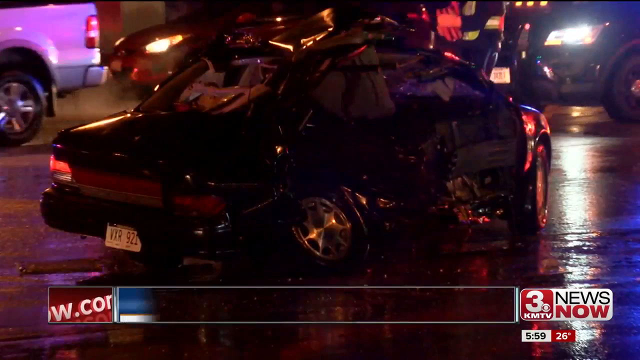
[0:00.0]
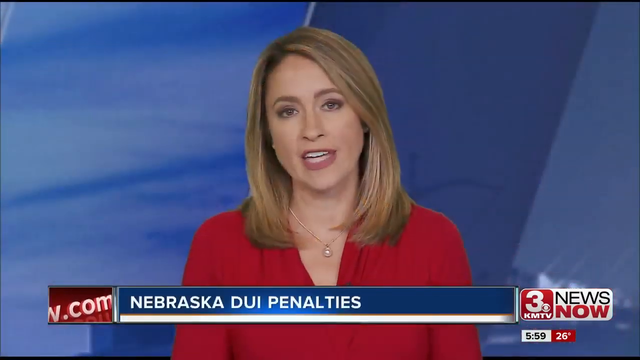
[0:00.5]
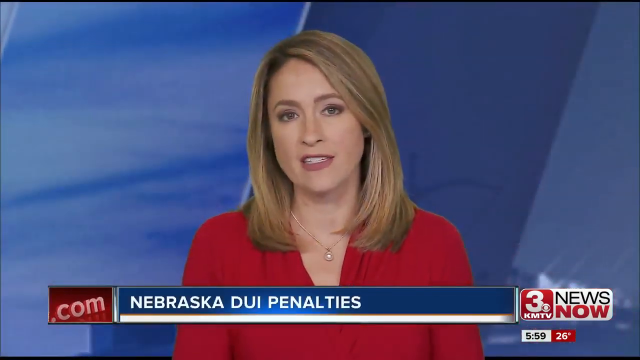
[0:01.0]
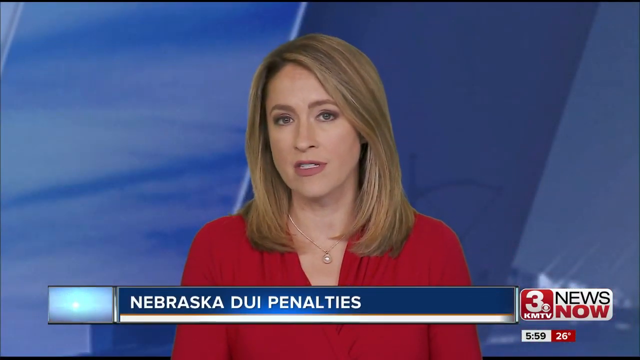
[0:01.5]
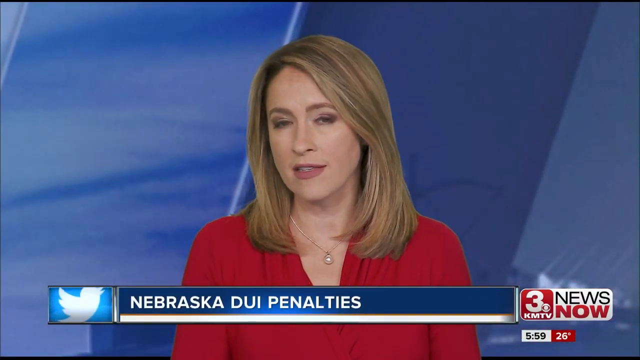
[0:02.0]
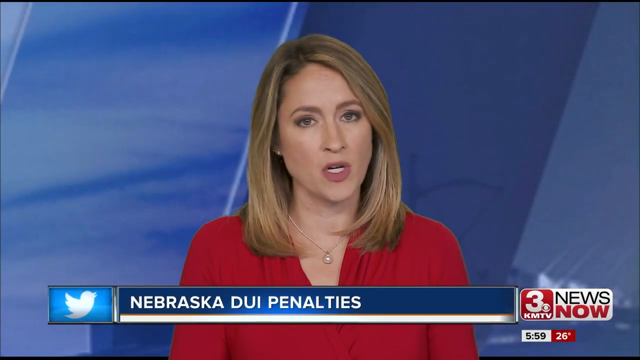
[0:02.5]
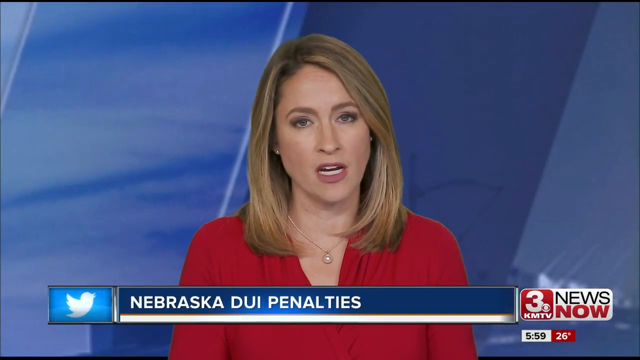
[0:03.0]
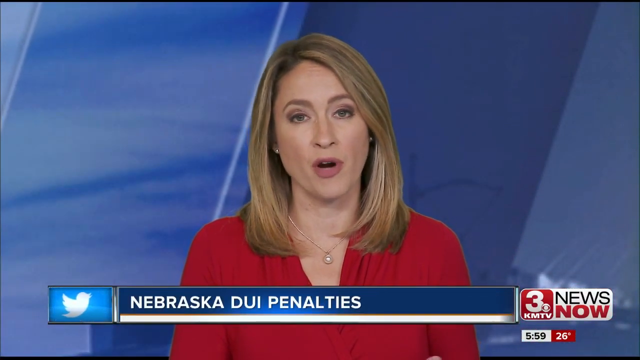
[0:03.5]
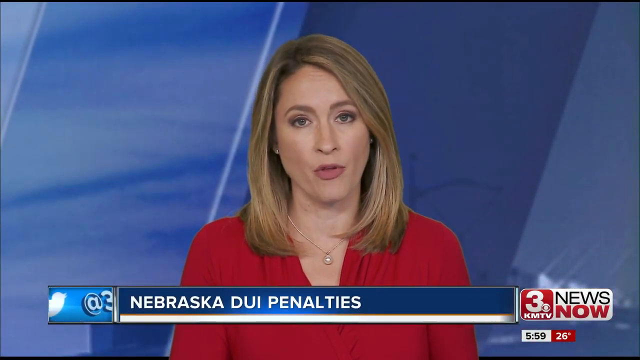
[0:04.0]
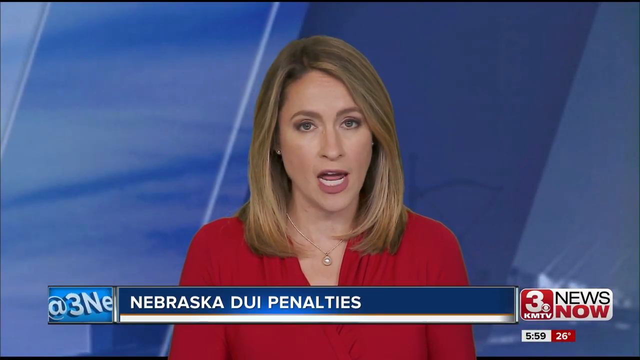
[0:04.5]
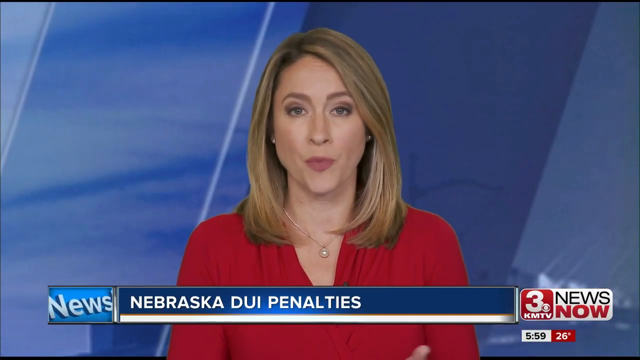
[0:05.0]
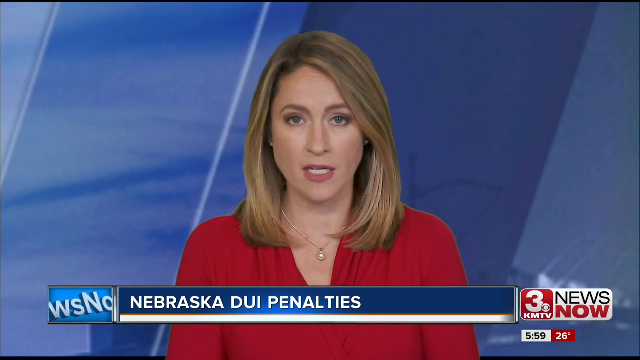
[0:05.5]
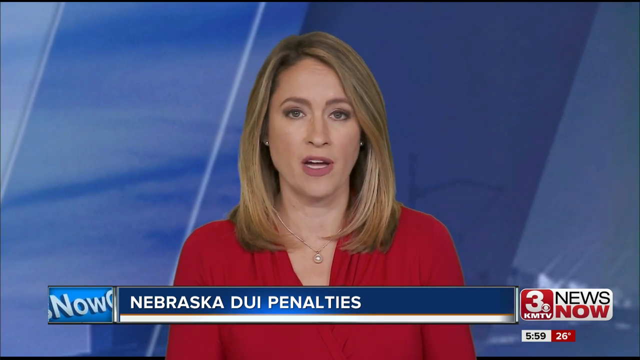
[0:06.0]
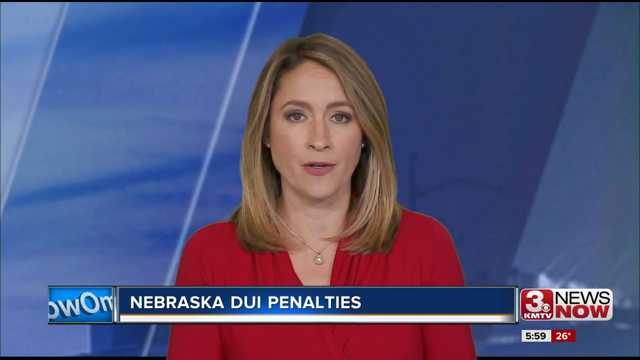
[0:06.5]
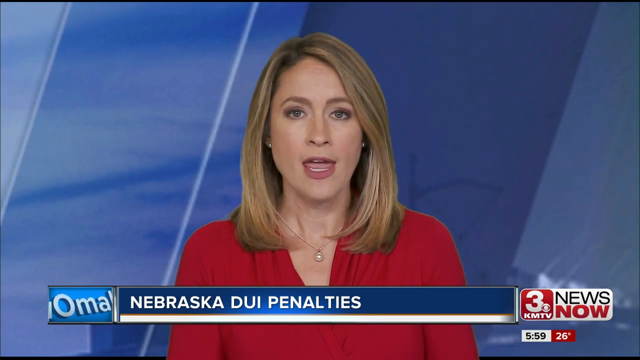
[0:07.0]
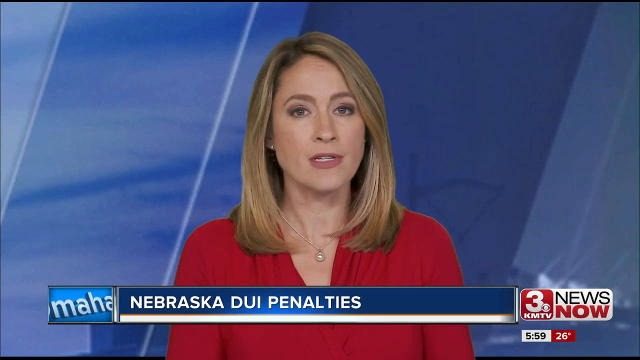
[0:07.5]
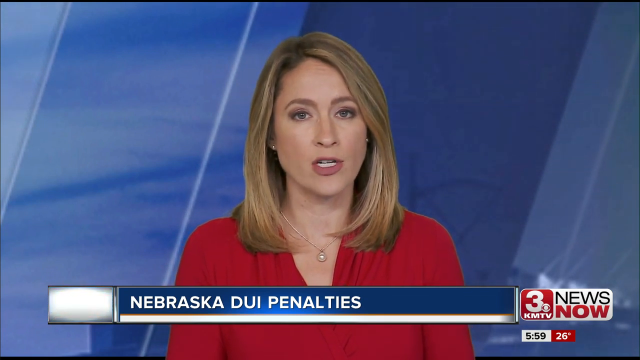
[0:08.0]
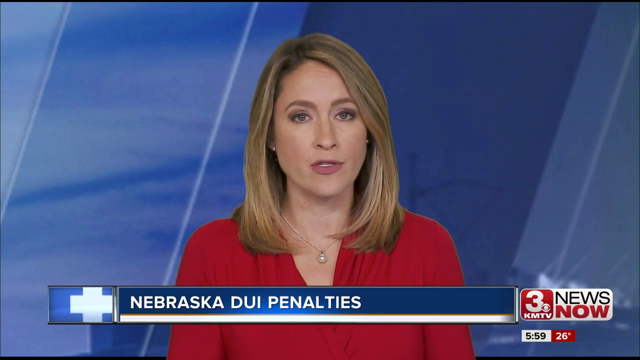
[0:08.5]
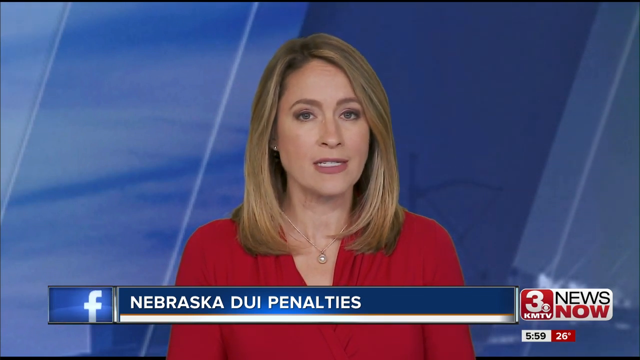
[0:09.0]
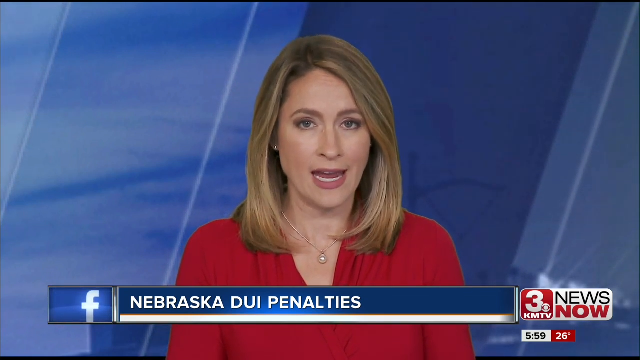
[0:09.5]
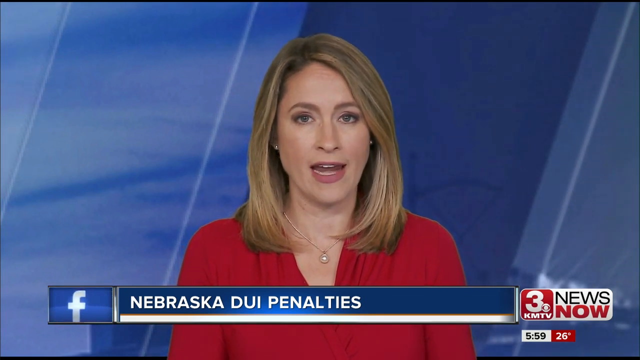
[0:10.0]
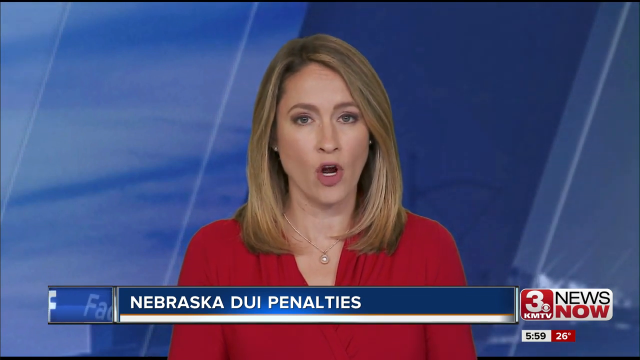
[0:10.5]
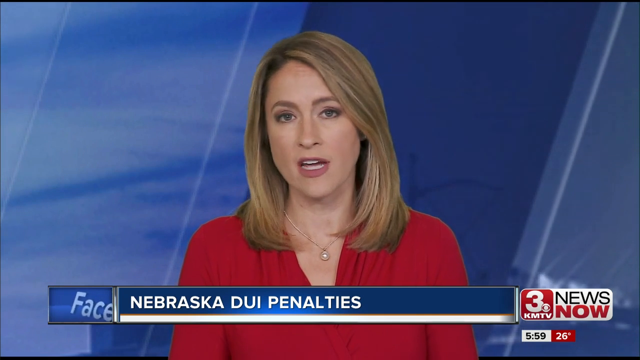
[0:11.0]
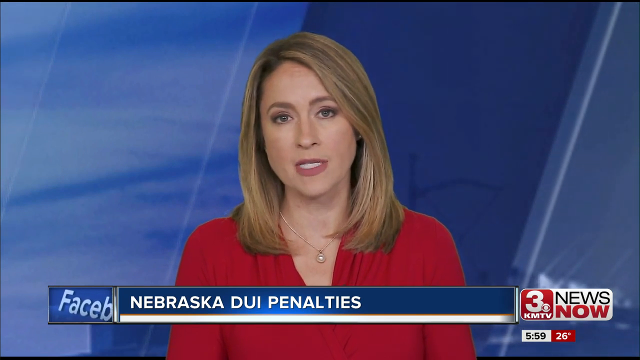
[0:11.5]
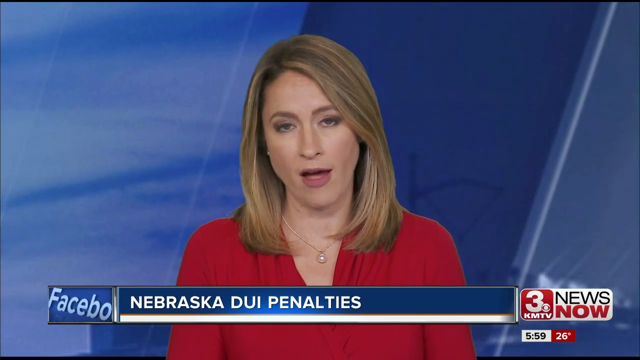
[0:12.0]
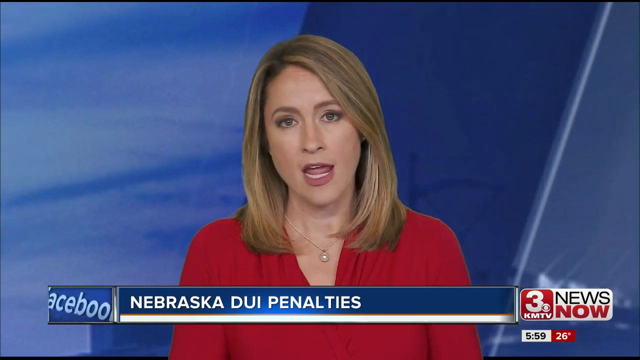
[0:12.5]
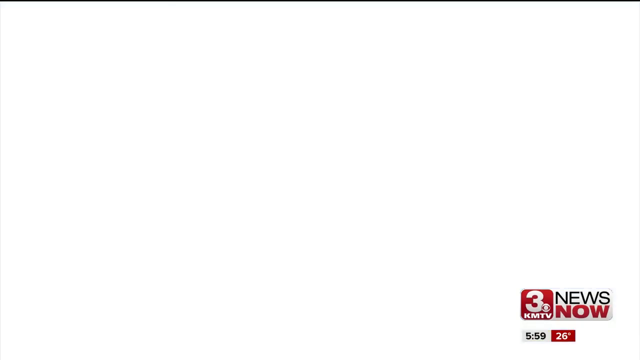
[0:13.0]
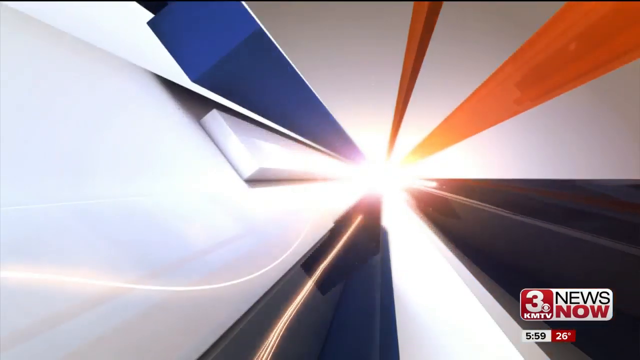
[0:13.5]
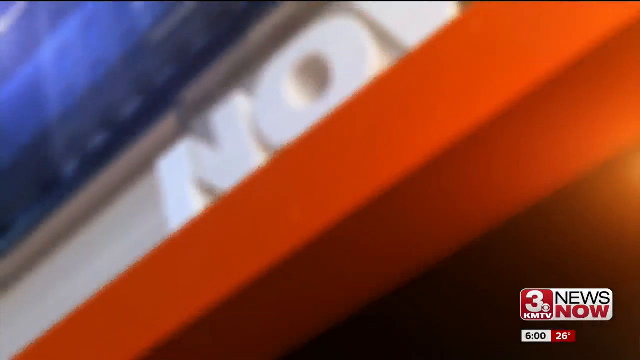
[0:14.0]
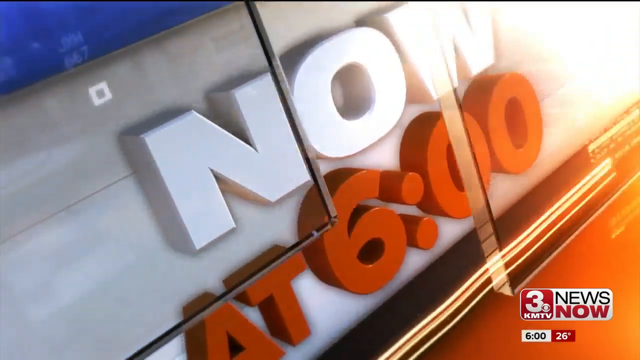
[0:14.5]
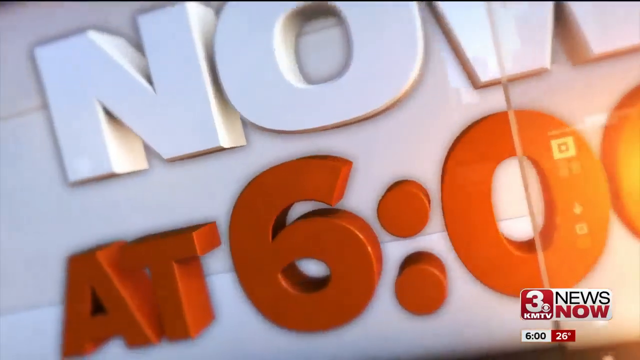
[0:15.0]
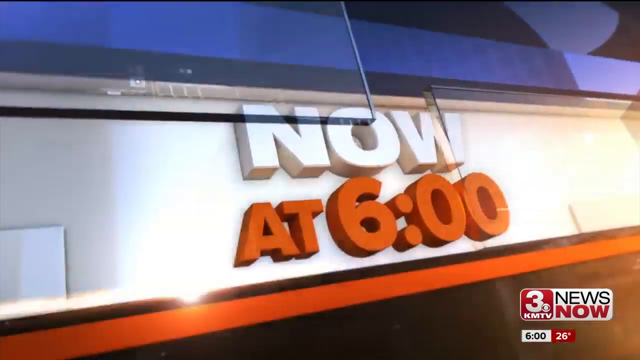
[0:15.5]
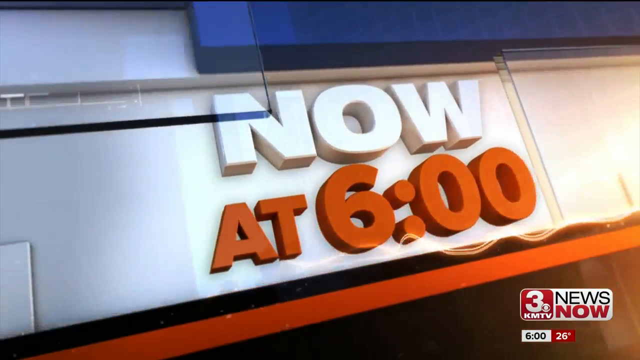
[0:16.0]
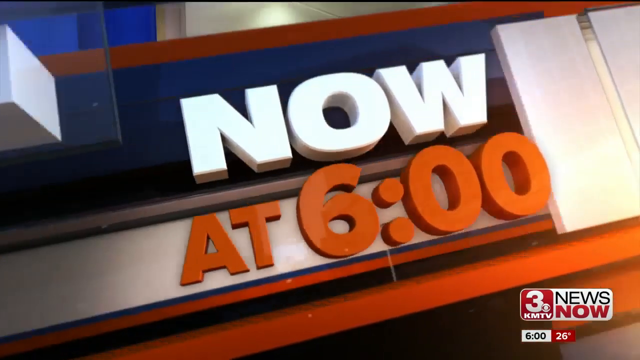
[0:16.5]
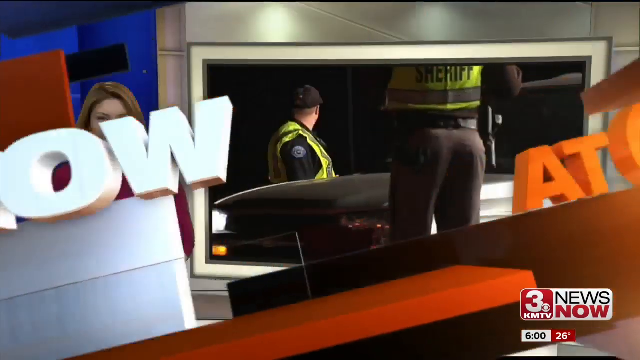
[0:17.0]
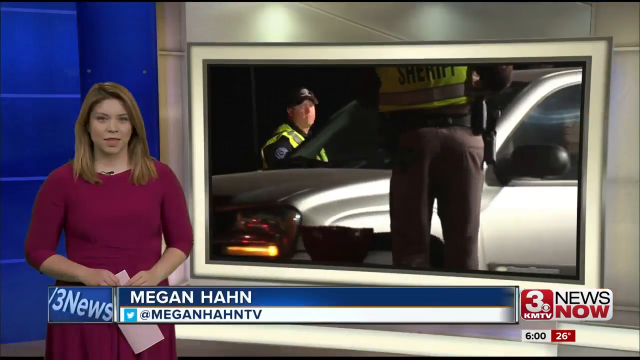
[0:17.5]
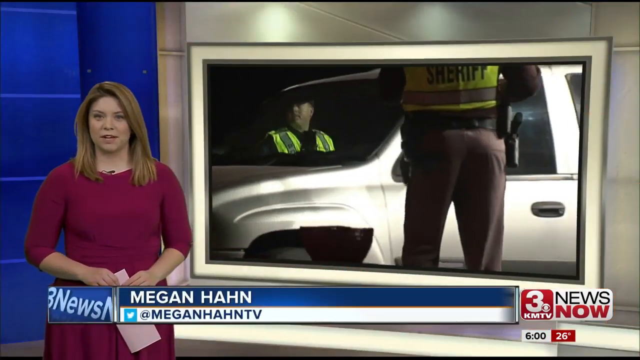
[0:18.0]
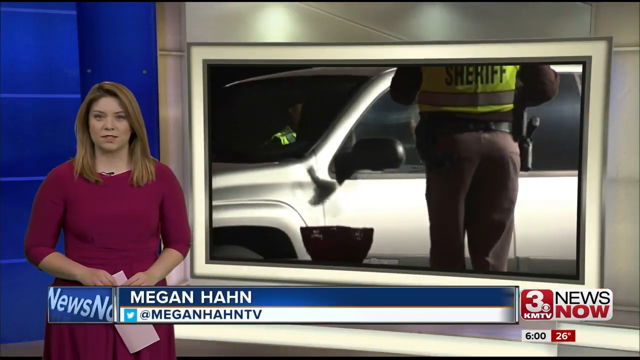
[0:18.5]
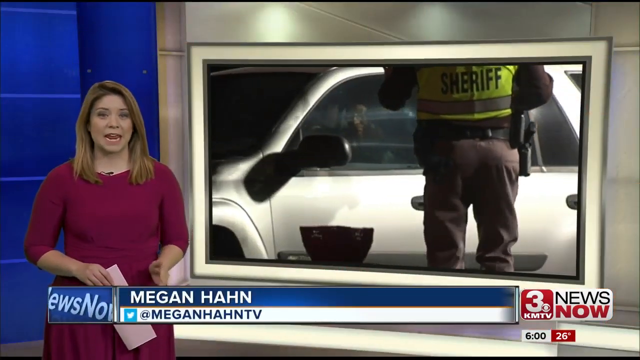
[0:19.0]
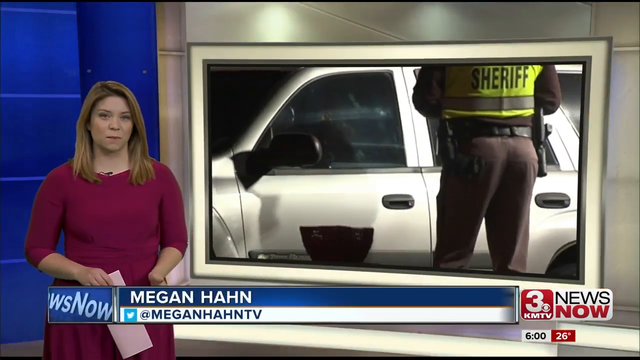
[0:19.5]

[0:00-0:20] A news item about drink driving in Nebraska appears on 3KMTV News Now. It opens on the aftermath of a crash, then moves to a news anchor in the studio: a woman in her 30s with shoulder-length fair hair, wearing a red dress and a necklace with a pearl pendant. It is 26 degrees Fahrenheit in Nebraska. At six o'clock the news headlines begin, given by a different reporter, Megan Hahn, who is also fair-haired and probably in her late 20s. She shows images on a monitor of sheriff's deputies pulling a car over for a check, presumably in relation to drink driving.